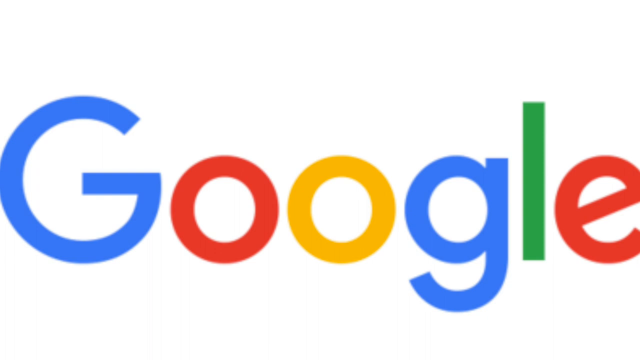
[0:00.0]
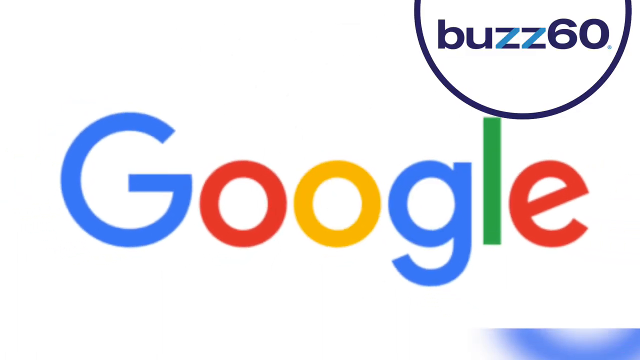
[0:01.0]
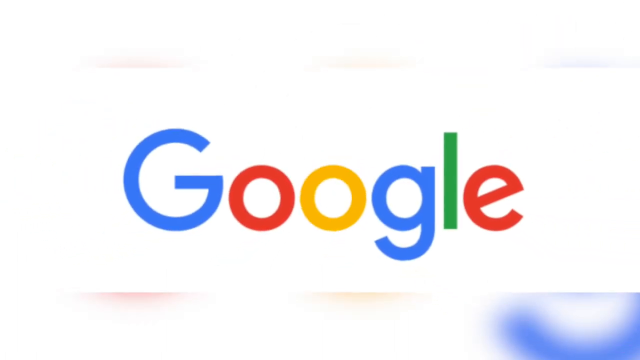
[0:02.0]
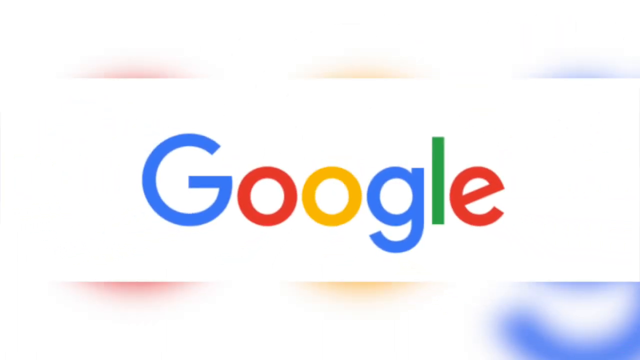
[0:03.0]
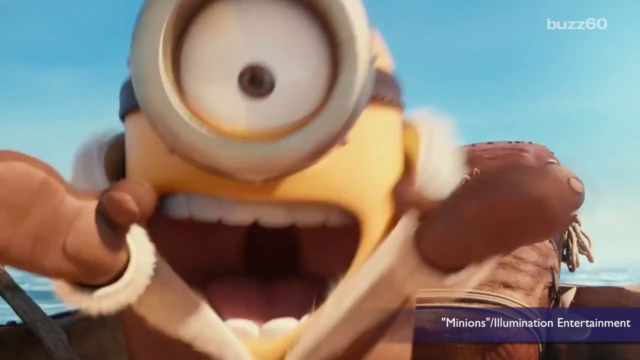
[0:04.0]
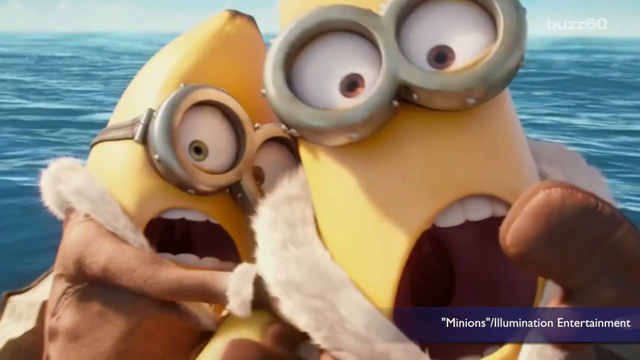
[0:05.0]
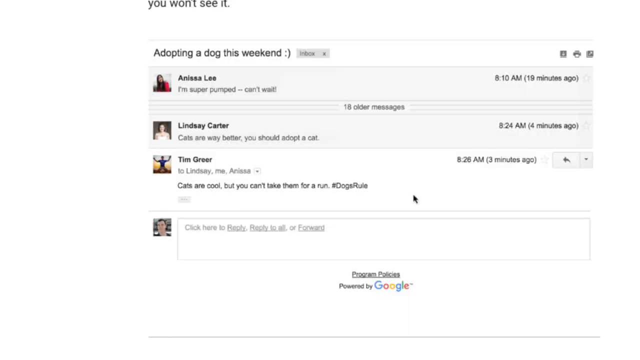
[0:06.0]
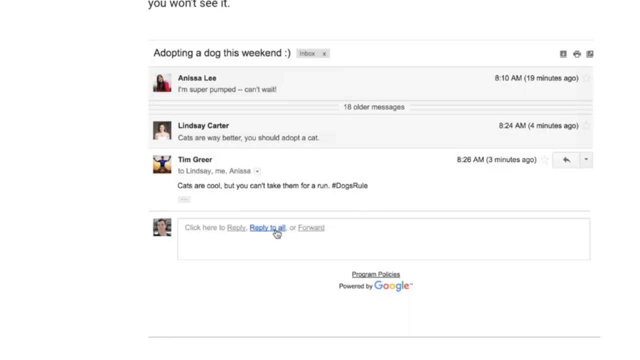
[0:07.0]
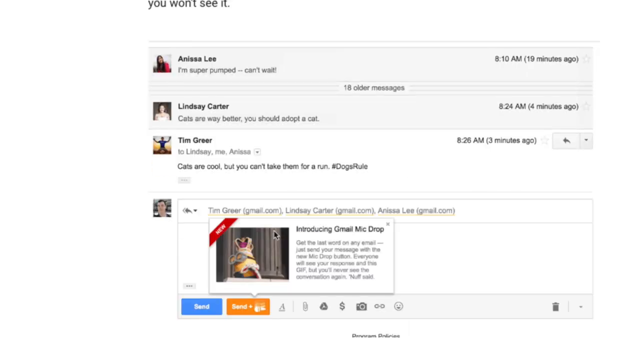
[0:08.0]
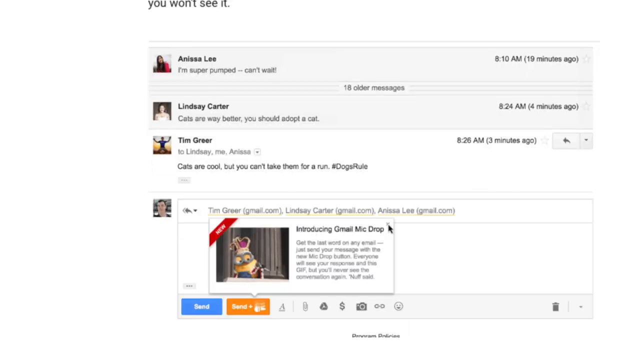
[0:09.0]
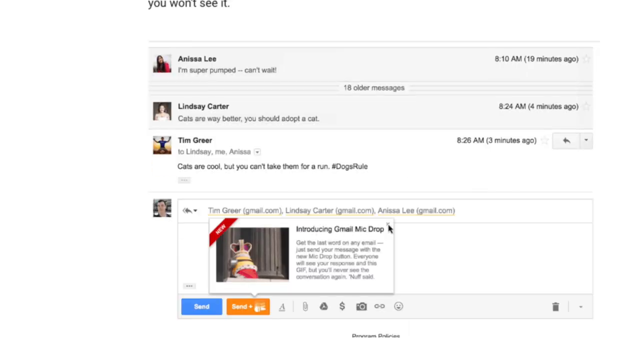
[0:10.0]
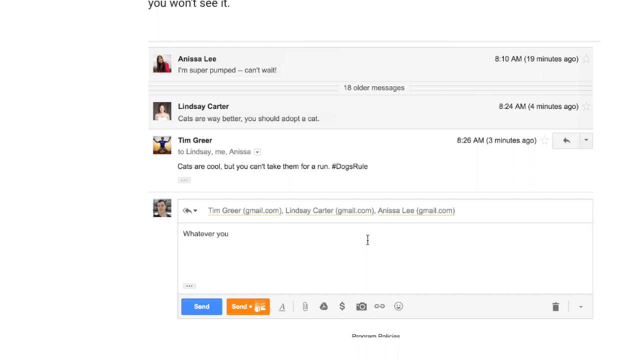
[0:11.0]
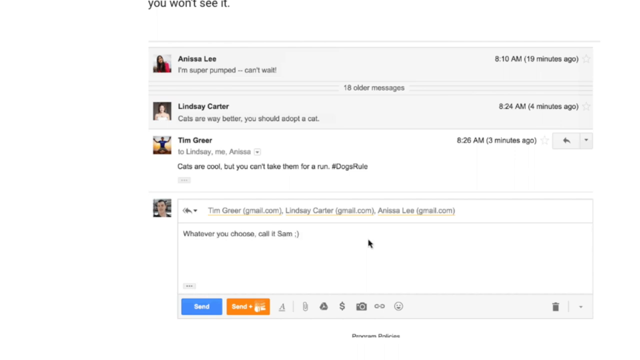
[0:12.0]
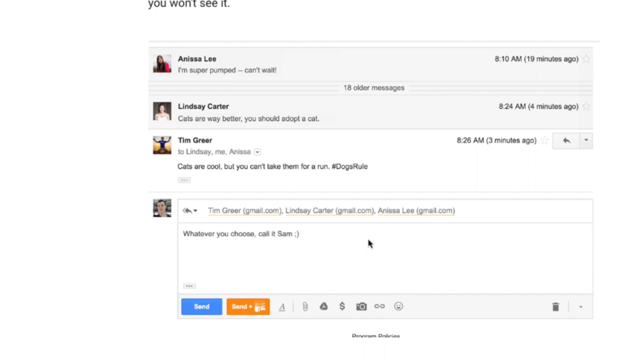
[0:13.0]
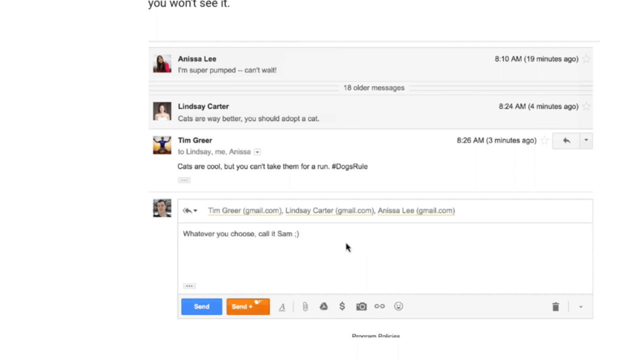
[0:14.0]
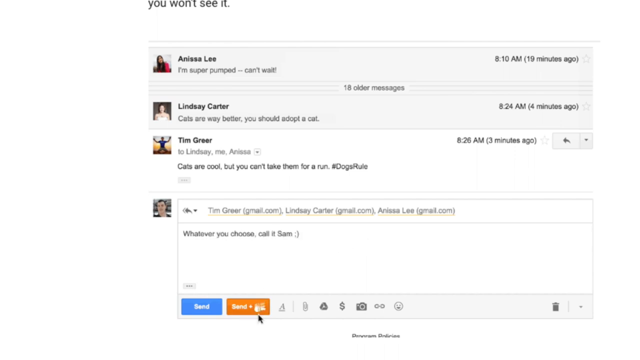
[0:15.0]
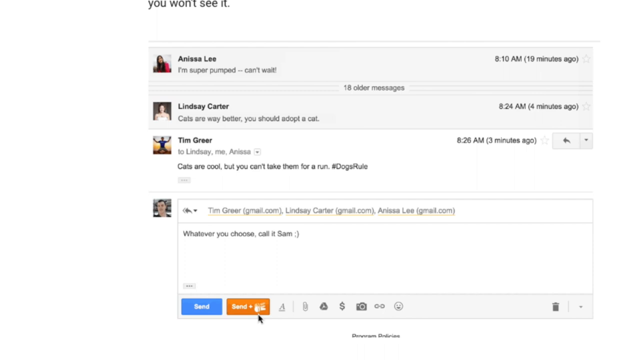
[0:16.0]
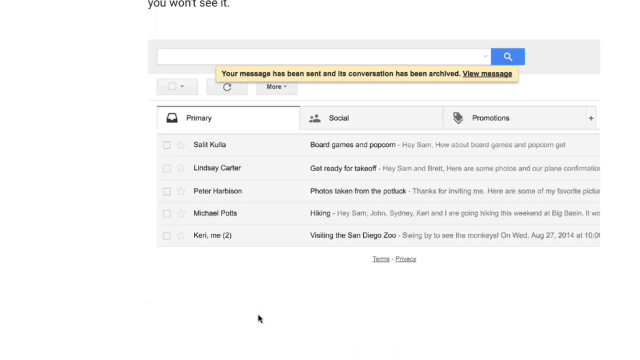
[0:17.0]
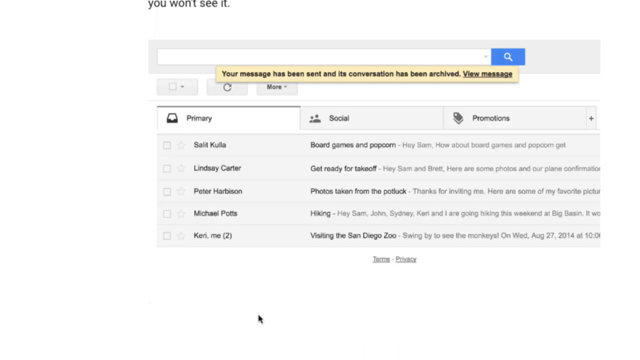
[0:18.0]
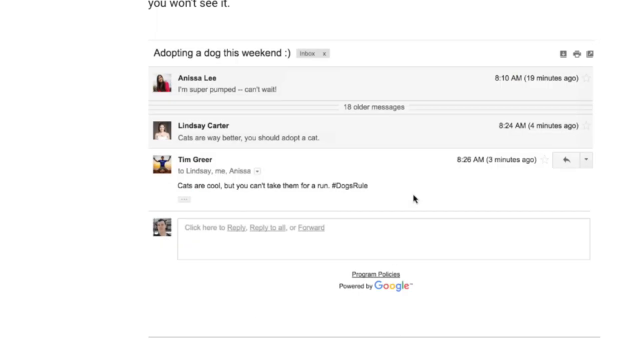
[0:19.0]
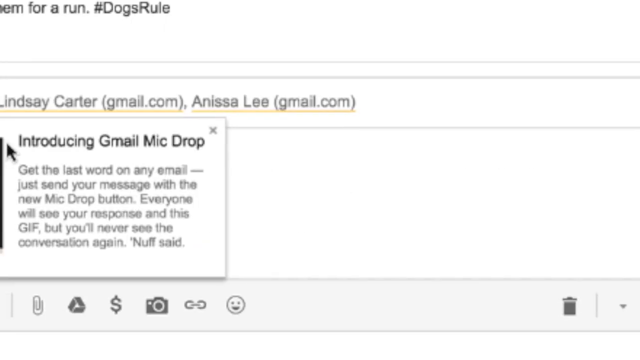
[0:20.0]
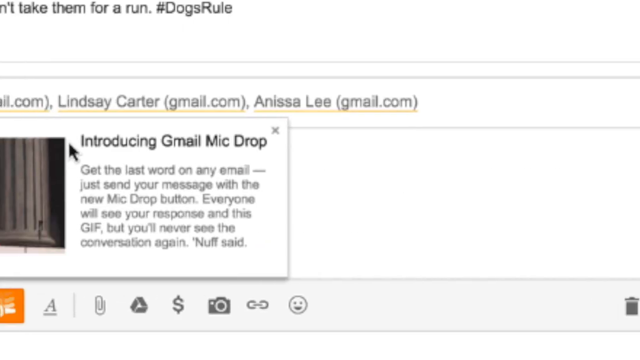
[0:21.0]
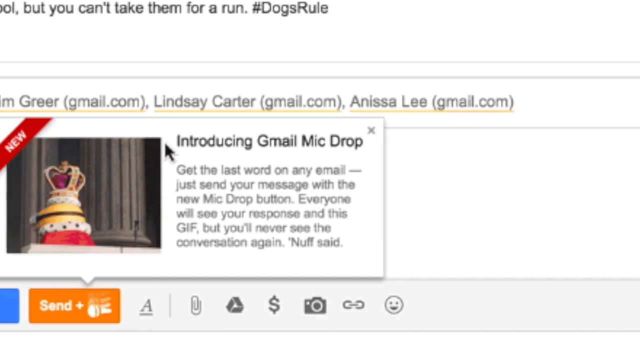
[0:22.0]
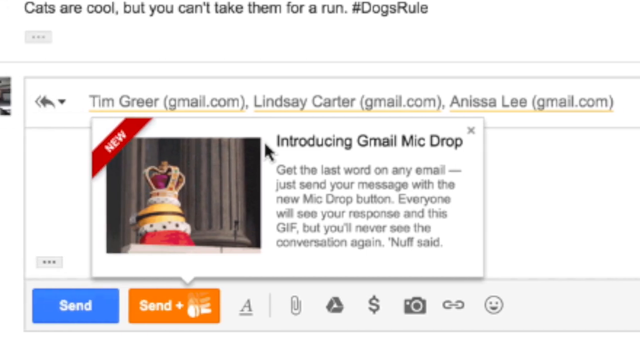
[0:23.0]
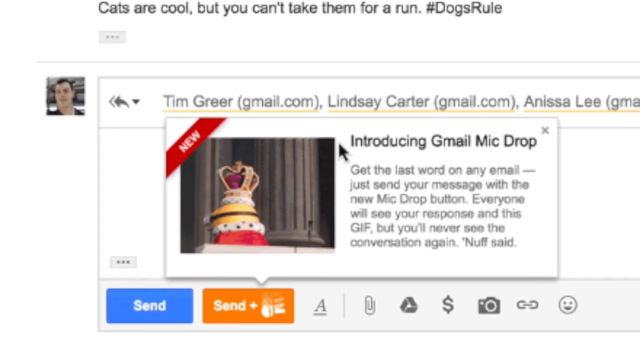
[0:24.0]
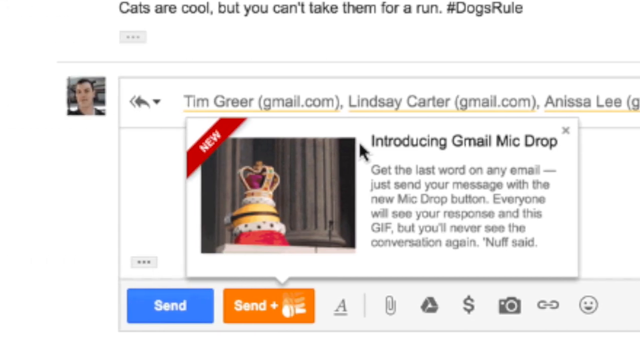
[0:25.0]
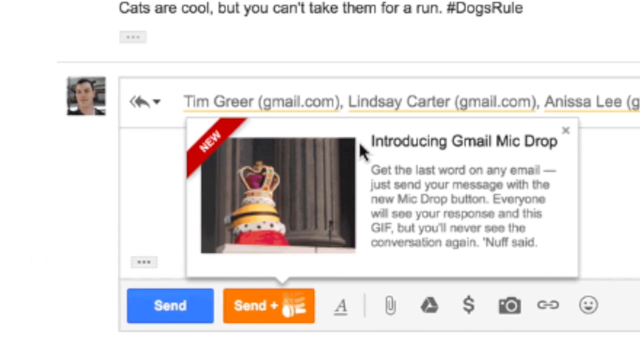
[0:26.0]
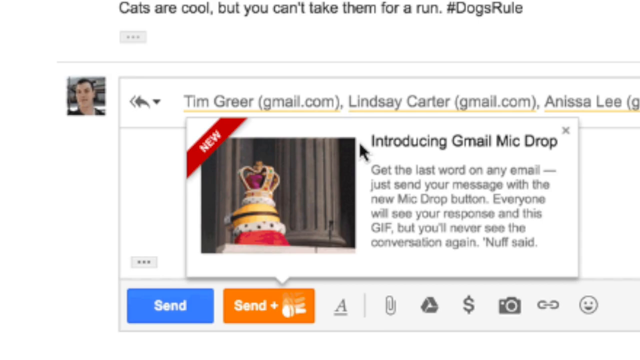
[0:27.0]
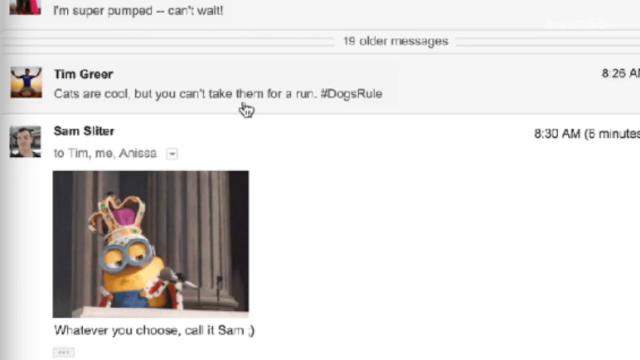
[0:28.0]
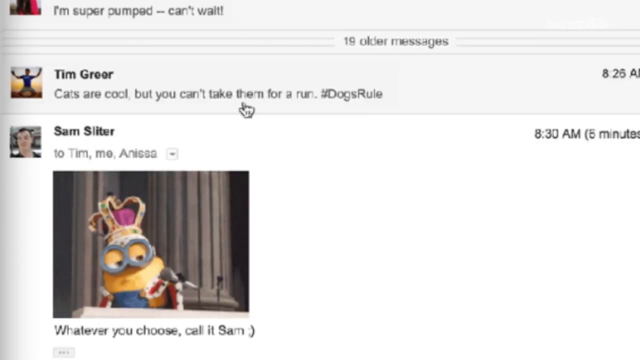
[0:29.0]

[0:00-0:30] Before playback starts, the video displays "Google", with "Buzz 60" in the upper right. Minions appear, and then the view switches to a screen where somebody is typing, apparently AI. Names appear, moving very quickly. Text reads "Introducing Gmail. Mic drop. Get the last word on any email." The screens switch rapidly. Someone appears to be sending the minion clip to someone in Gmail, seemingly by copying and pasting it. Text reads "Gmail mic drop. Get the last word" and "Everyone will see your response in this GIF."